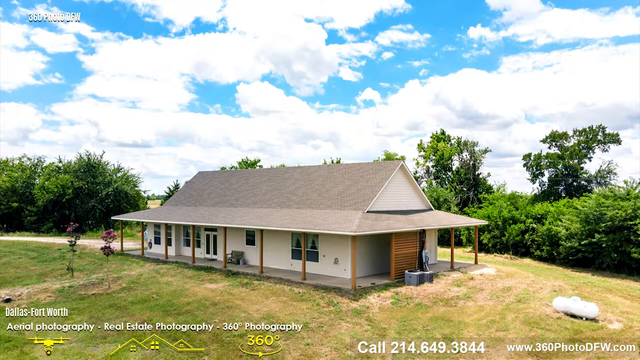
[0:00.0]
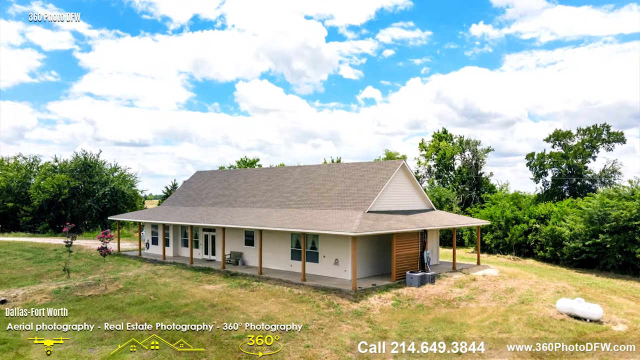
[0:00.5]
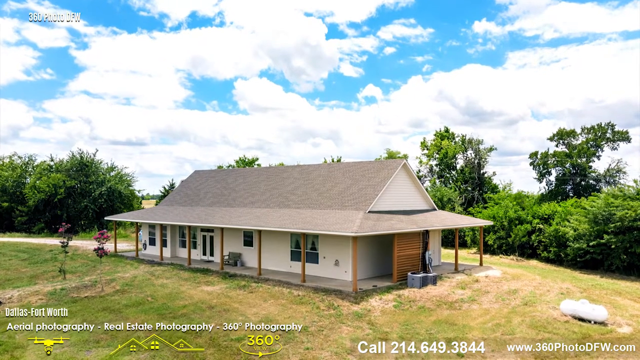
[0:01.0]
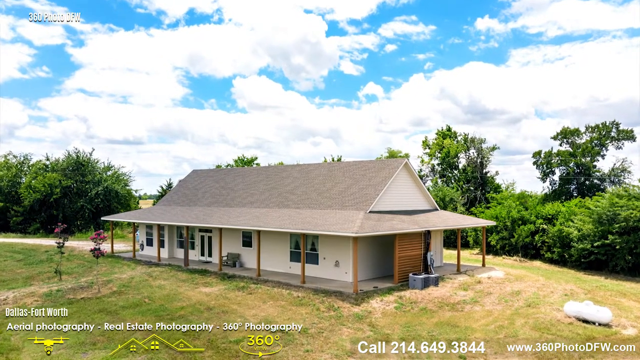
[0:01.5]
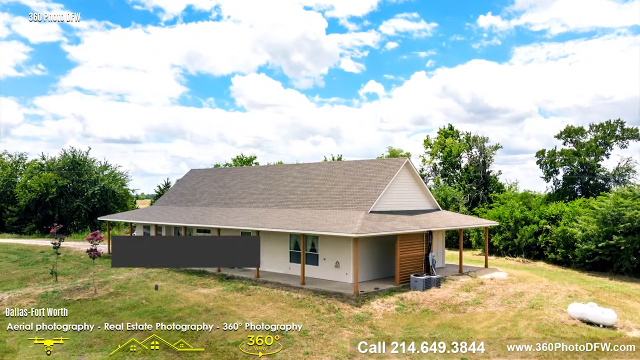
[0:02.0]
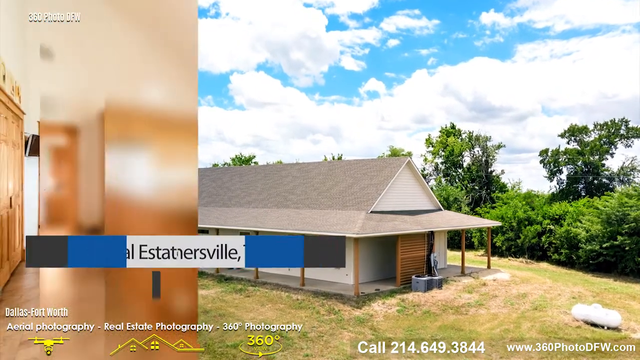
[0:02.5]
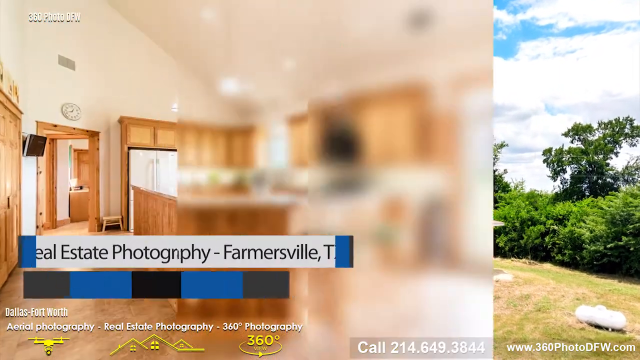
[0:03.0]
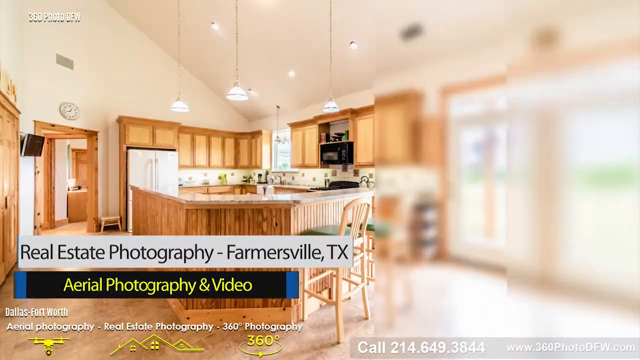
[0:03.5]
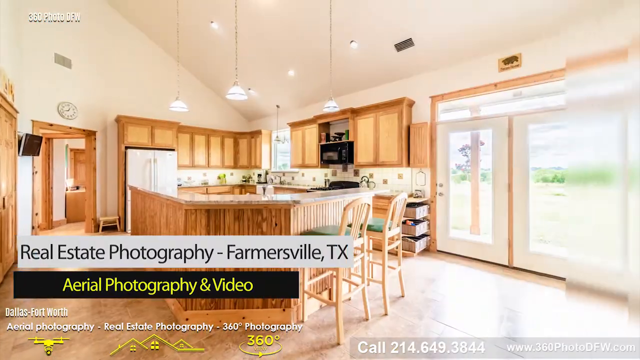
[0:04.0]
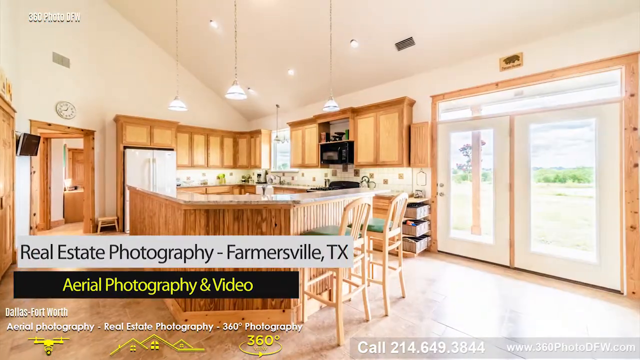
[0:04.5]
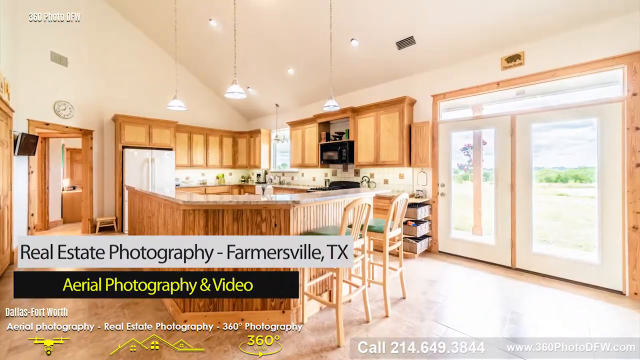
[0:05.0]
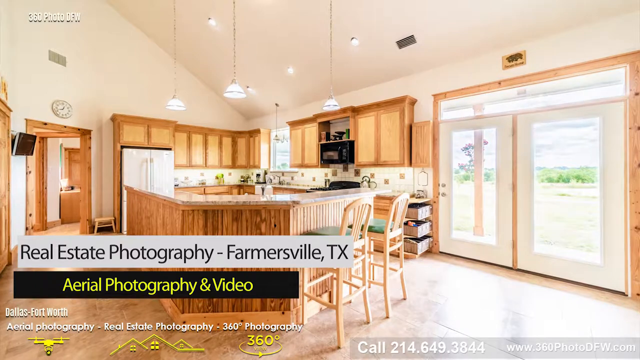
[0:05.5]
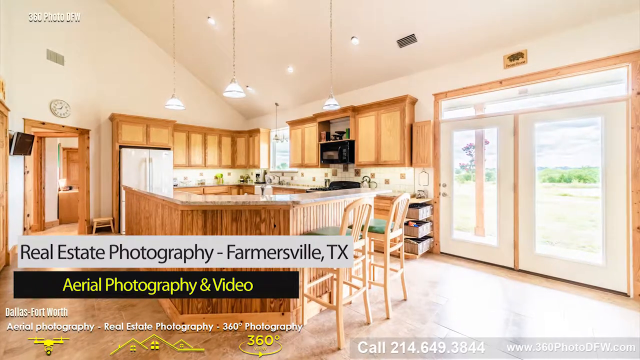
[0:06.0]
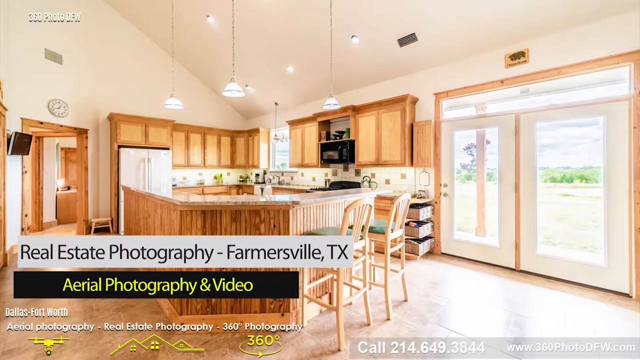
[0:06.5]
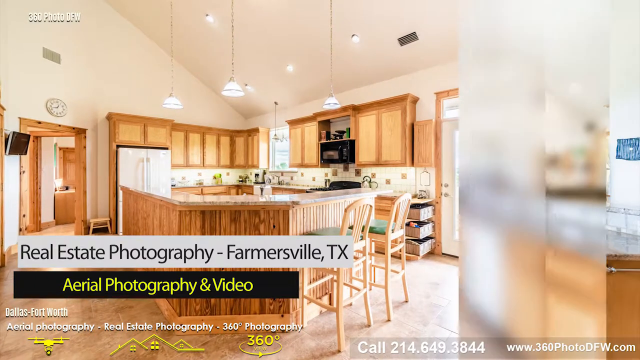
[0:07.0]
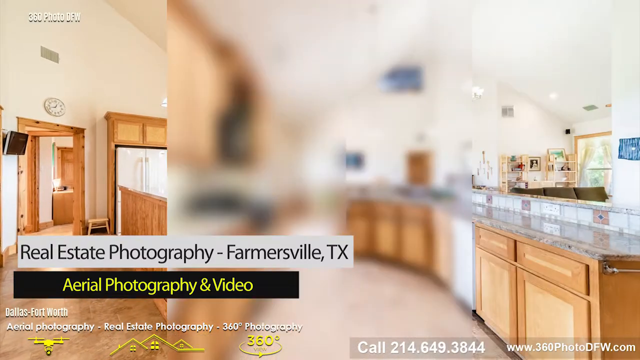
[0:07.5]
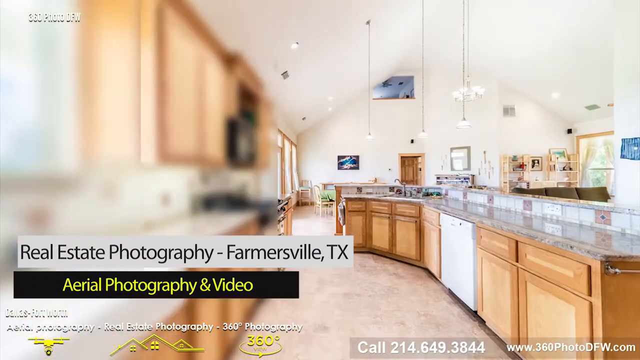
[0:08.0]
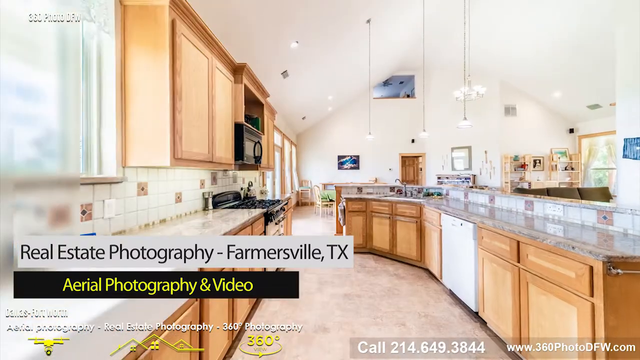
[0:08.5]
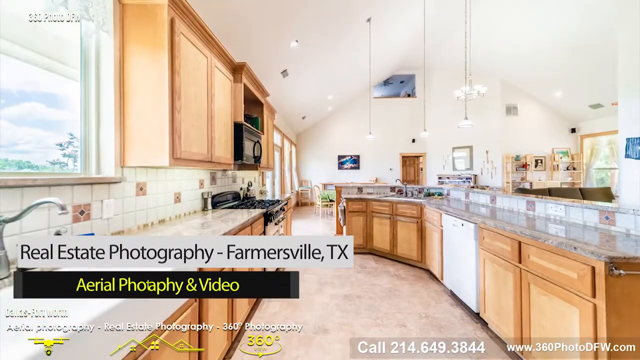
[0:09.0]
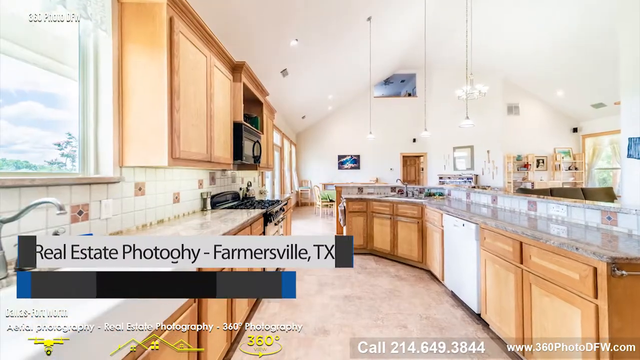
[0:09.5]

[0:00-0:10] The video opens on the exterior of a house, with grass and trees in the background under a blue, cloudy sky. It looks like a still image, possibly partially rendered and partially photographic. The house is white and gray, with a wooden fence post along the overhang reaching across the entire house from this angle, and a concrete porch. The view zooms in, and graphics appear reading "Real estate photography, Farmsville, Texas" and "Aerial photography and video." The screen transitions to the interior of a kitchen with light wooden cabinets and chairs, a little wallpaper between the counters and cabinets, light-colored walls and ceiling, three light fixtures, a glass patio door, and a lot of natural light. The next image shows another angle of the kitchen: many cabinets, a very long continuous countertop on the right, and on the left more countertop with the sink and the appliances. The appliances are black and the countertops are neutral gray. The living room is visible in the background.